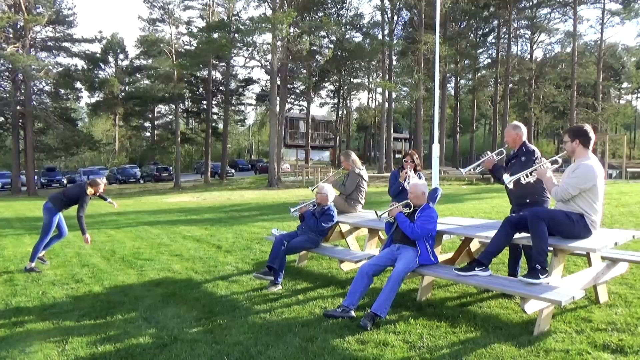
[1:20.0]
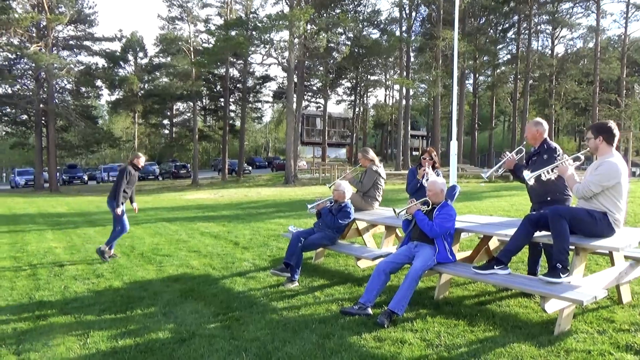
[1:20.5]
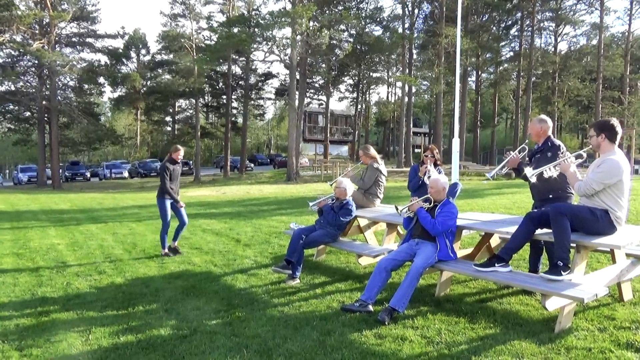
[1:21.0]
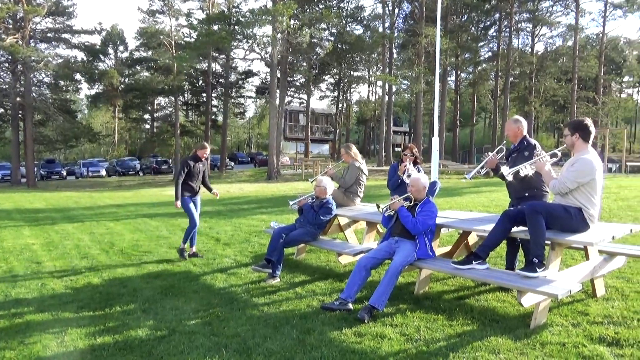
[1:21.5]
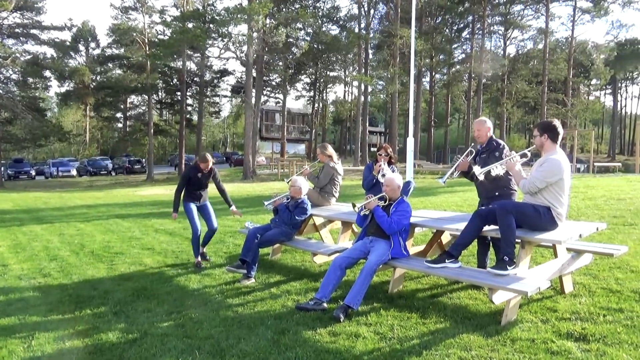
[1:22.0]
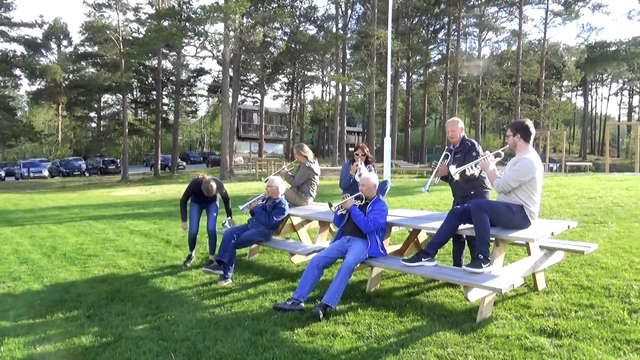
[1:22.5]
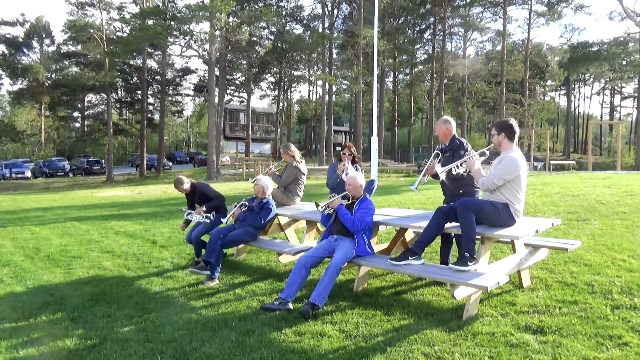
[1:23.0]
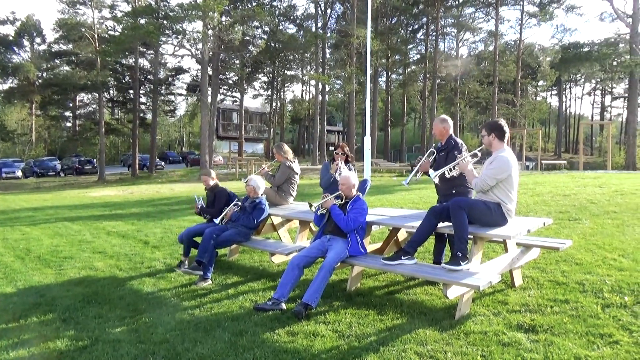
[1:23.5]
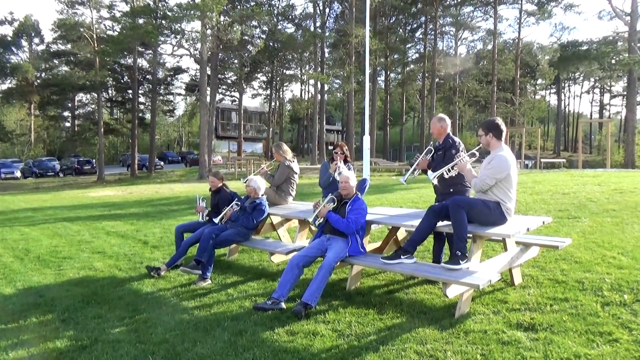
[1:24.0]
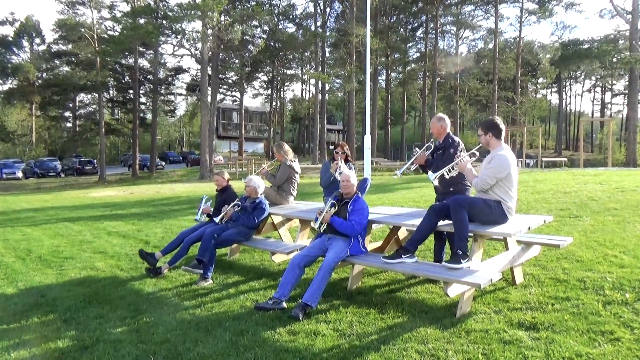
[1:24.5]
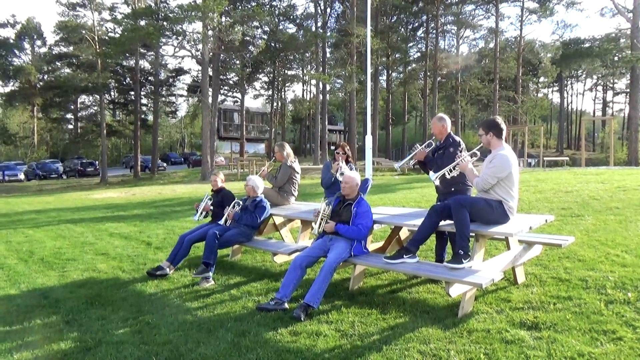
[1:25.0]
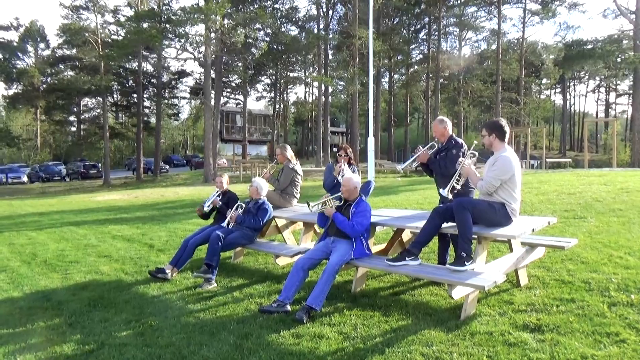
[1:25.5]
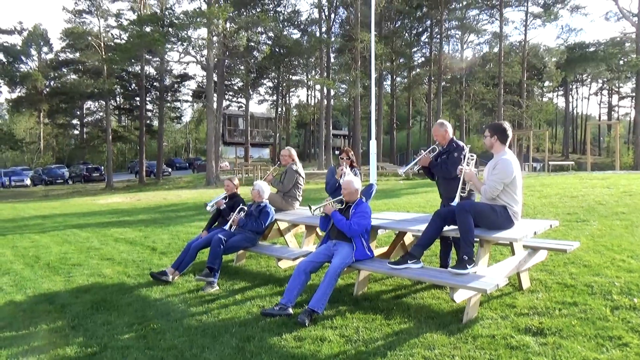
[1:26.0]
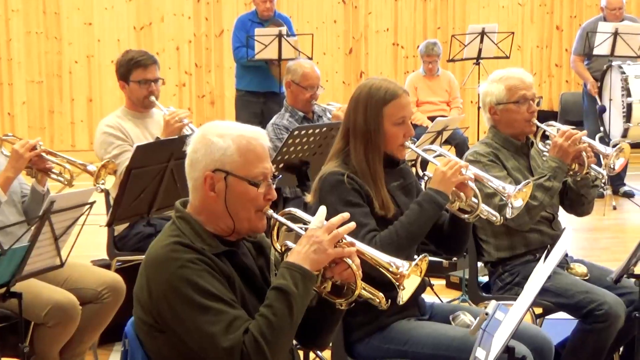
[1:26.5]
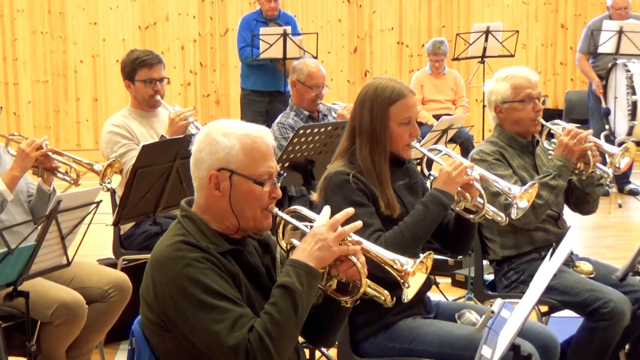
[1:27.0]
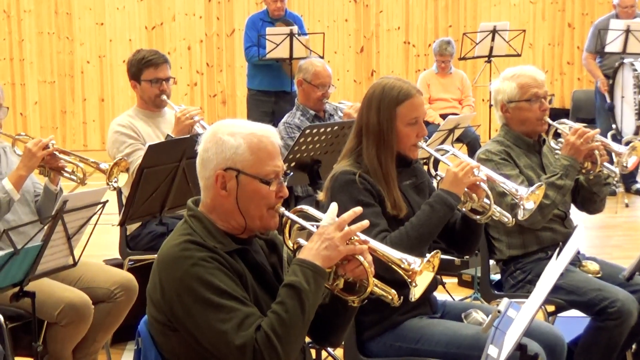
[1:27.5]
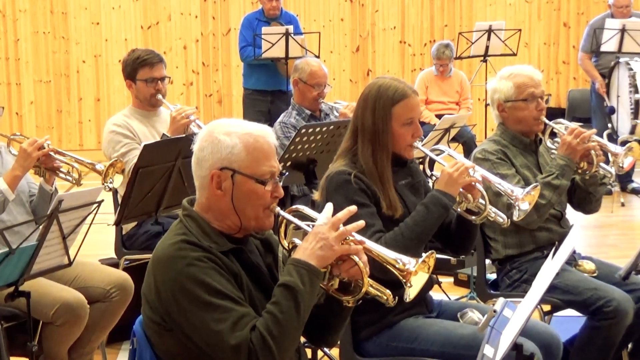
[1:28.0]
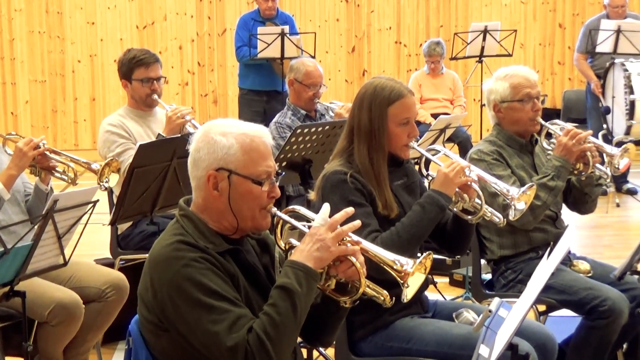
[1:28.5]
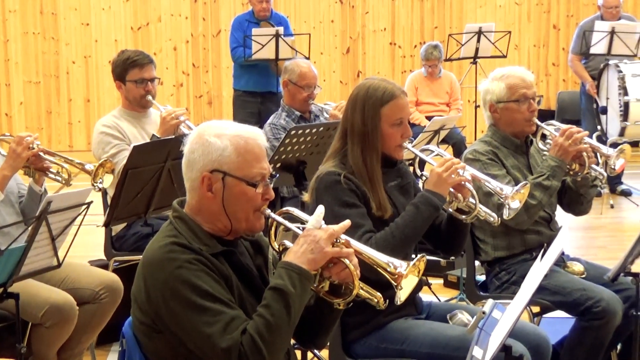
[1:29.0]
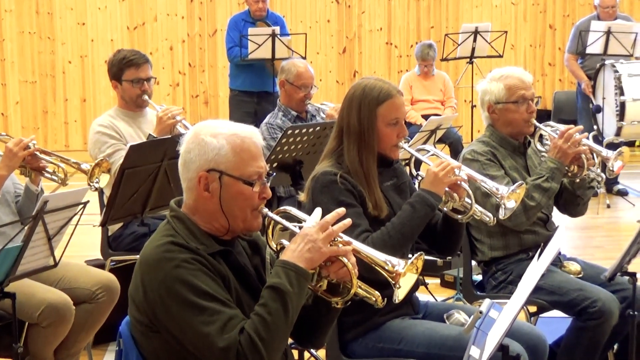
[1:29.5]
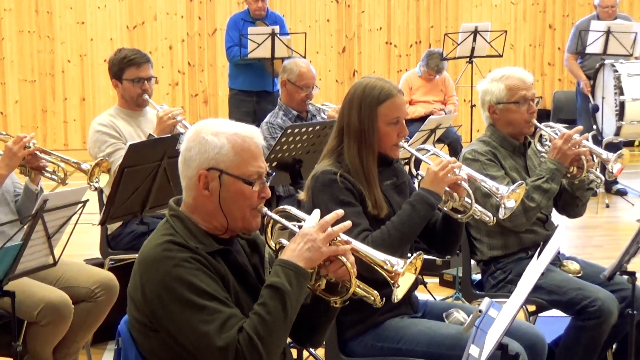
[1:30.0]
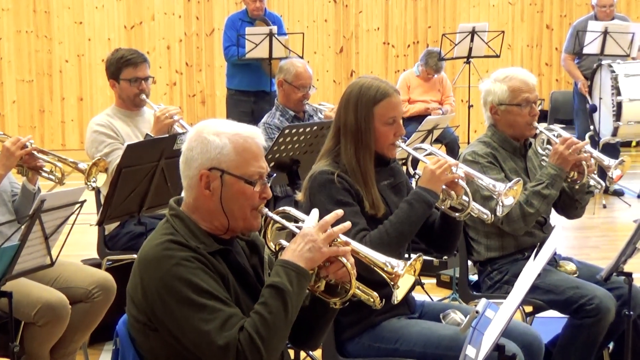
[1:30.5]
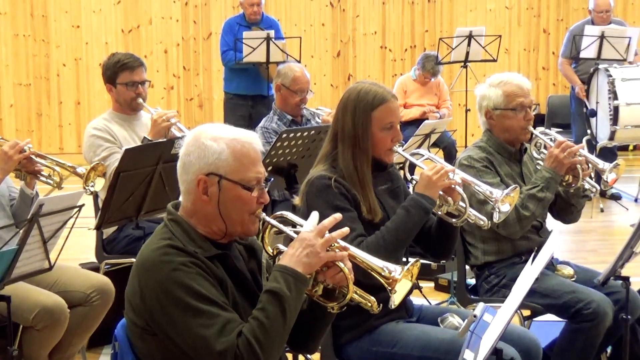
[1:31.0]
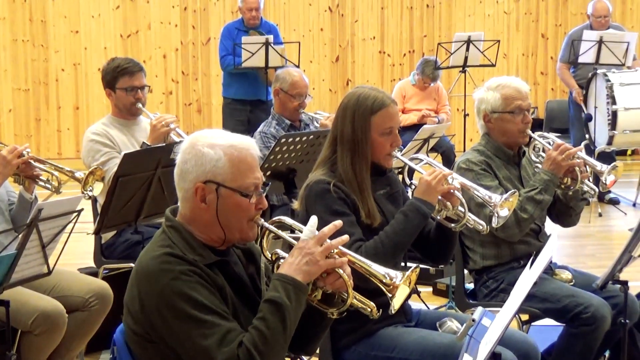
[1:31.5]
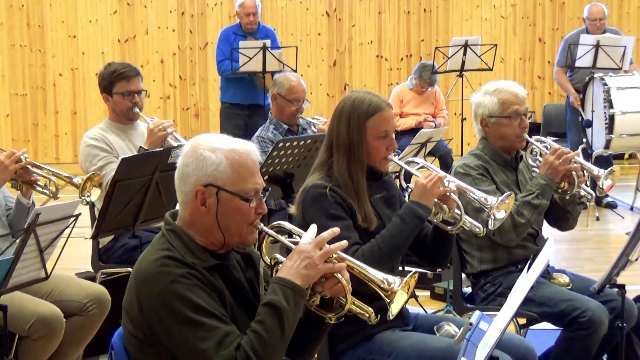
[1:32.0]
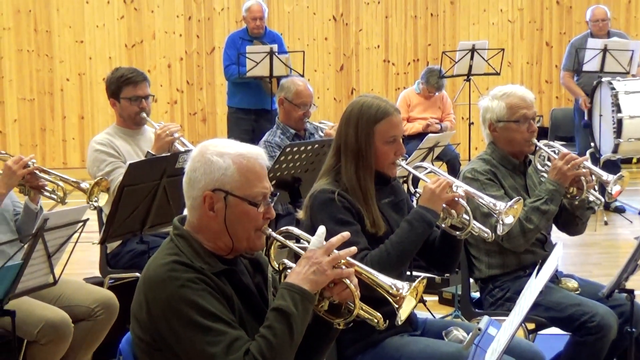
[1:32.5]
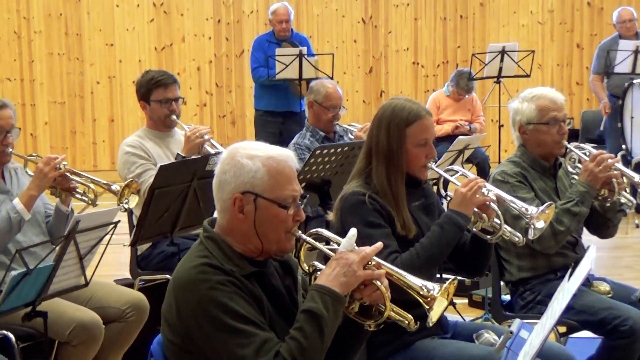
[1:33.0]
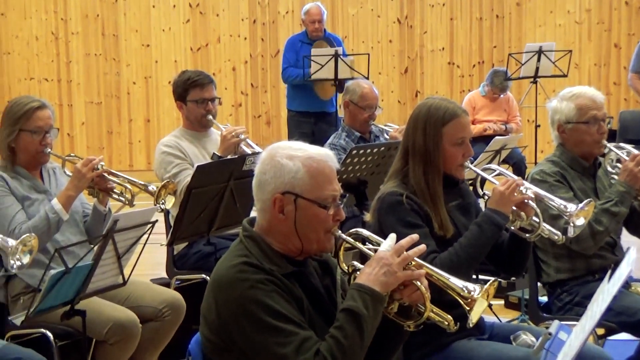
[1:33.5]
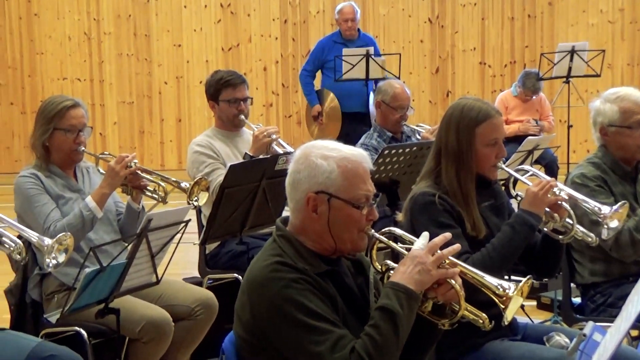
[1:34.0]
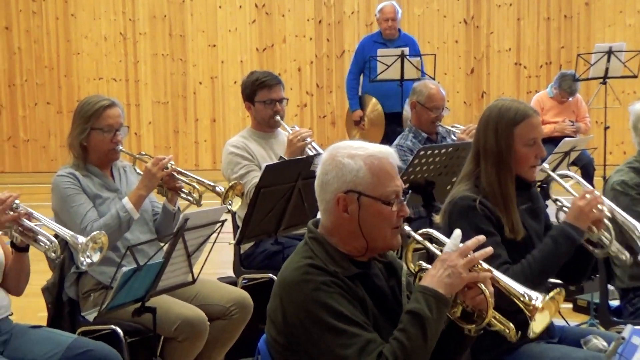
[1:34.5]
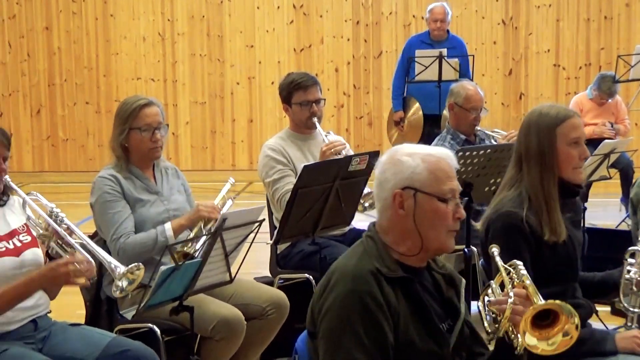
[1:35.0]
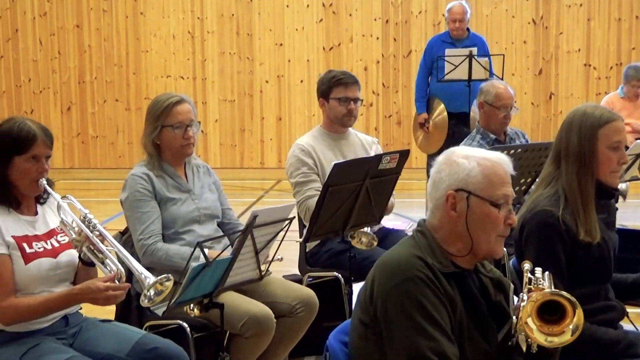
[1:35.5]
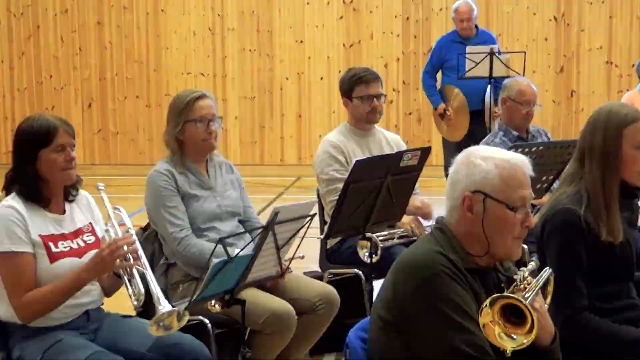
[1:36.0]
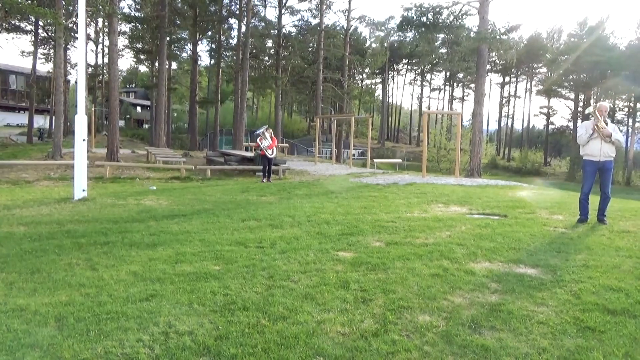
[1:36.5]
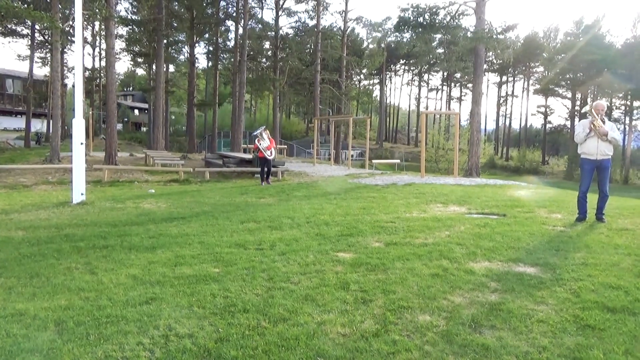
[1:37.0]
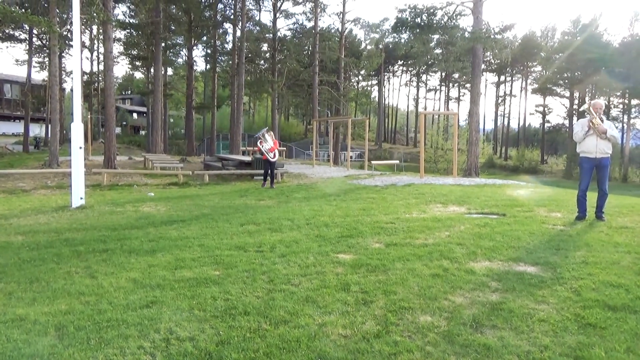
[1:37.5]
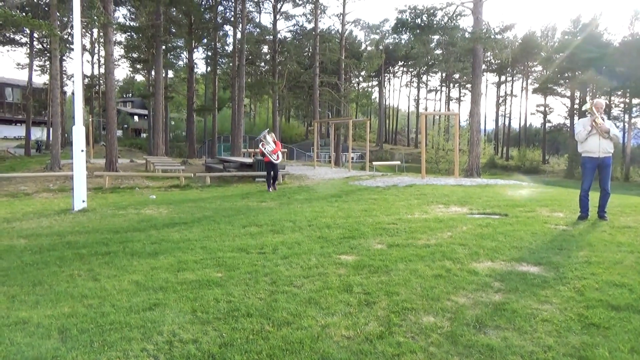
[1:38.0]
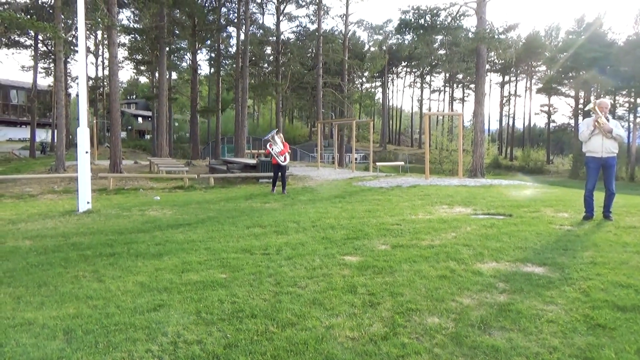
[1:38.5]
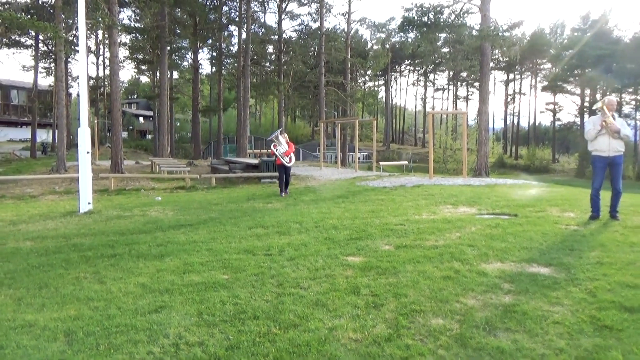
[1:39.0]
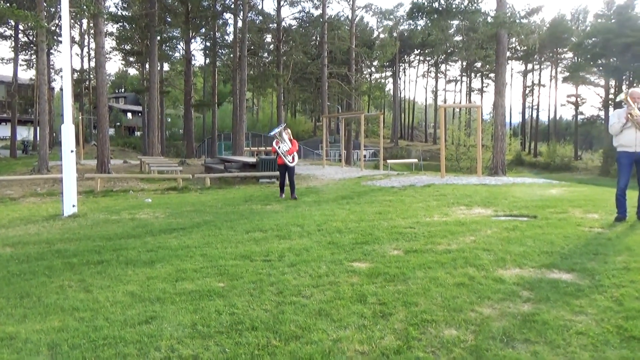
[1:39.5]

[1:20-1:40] A group of people sits on a wooden park bench in a grassy field, all playing trumpets. A person who just got up from doing cartwheels walks toward them; the girl sits down on the park bench, picks up a trumpet, and plays with the rest of the group. The video cuts to many people in a basketball stadium with brown wood paneling on the walls. Everyone in frame plays a trumpet, their fingers moving up and down as they blow into their trumpets. A man holding cymbals is in the background. The video cuts to a large grassy field, where a man on the right plays a brass instrument and a woman on the left also plays a brass instrument while walking toward the camera.